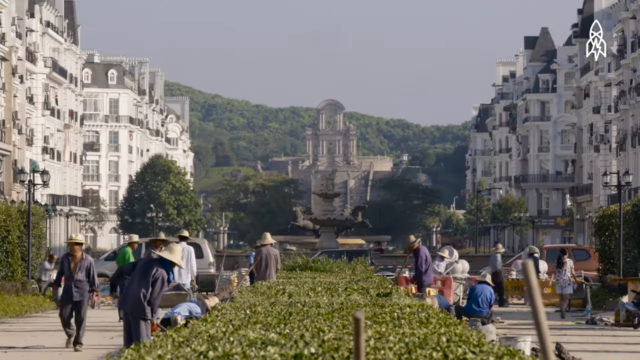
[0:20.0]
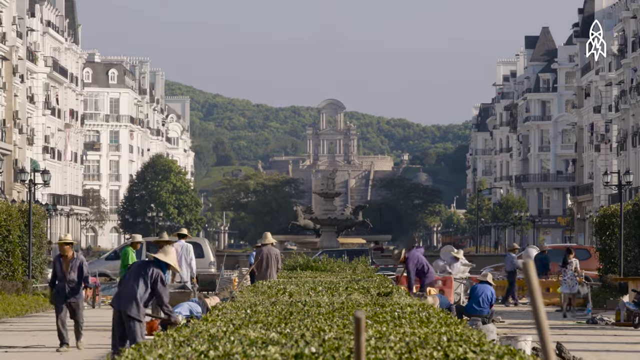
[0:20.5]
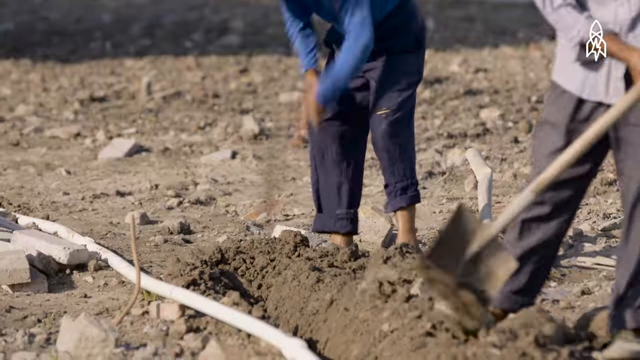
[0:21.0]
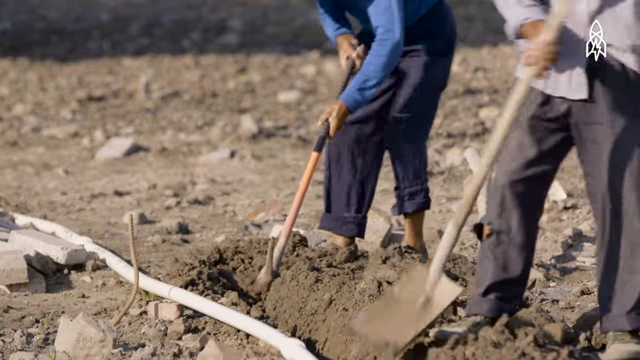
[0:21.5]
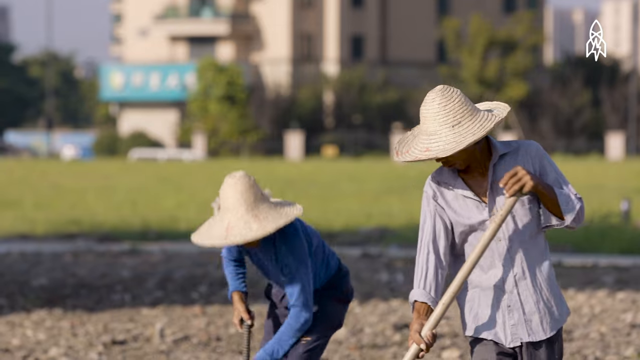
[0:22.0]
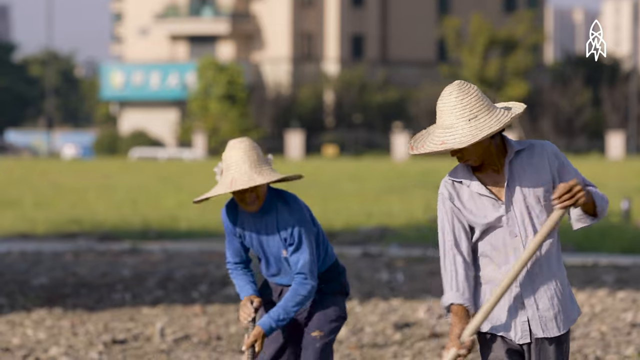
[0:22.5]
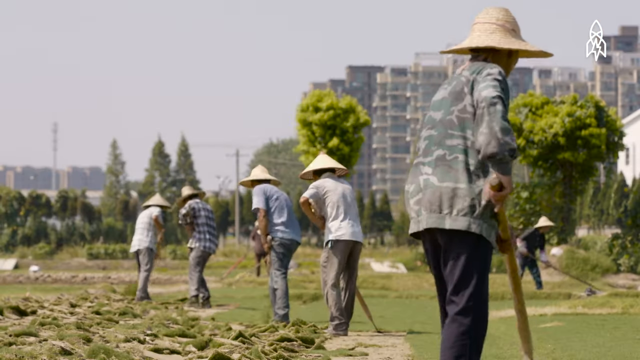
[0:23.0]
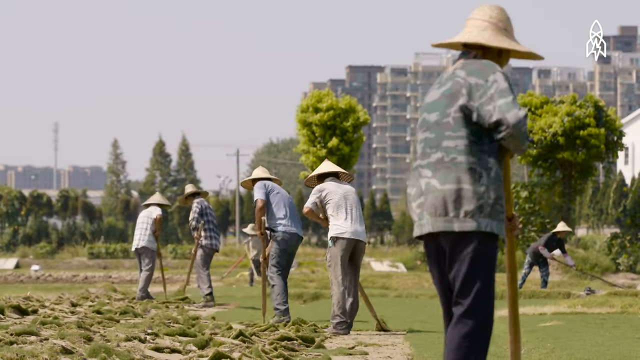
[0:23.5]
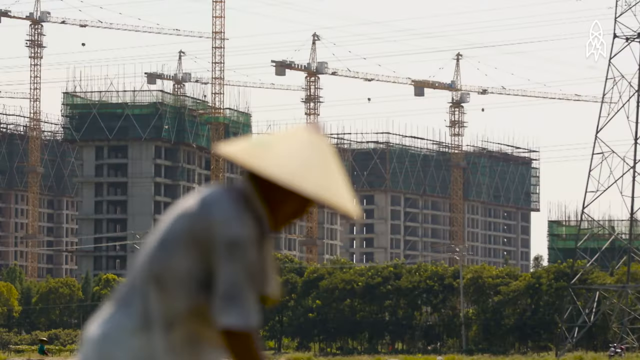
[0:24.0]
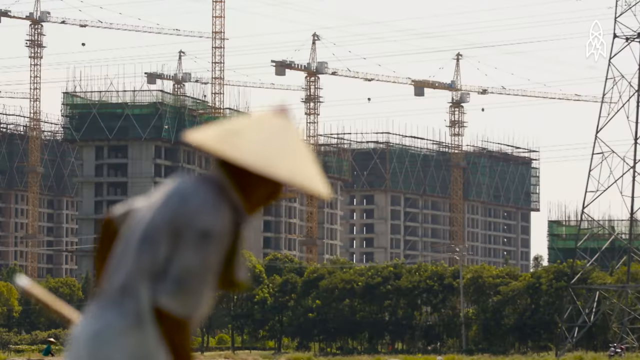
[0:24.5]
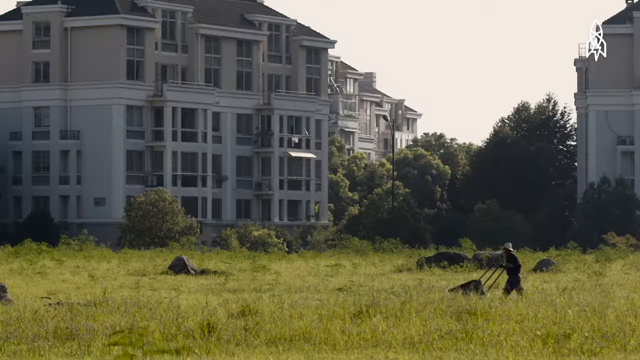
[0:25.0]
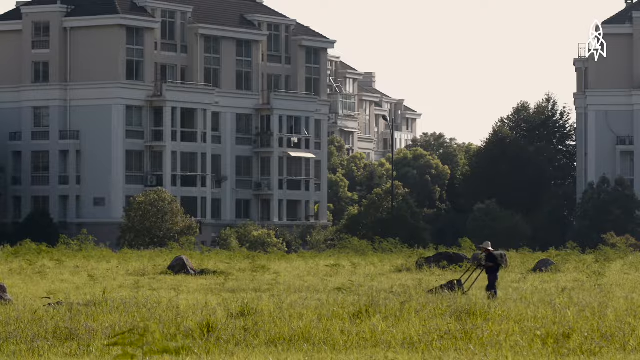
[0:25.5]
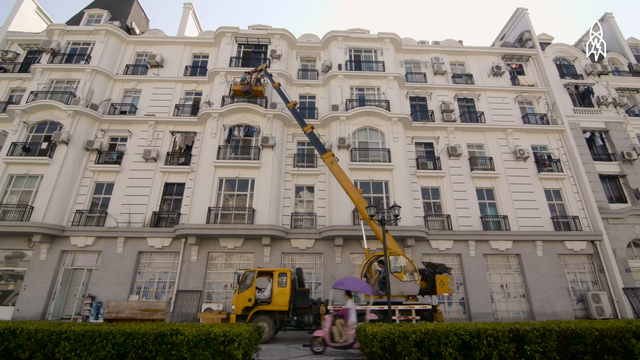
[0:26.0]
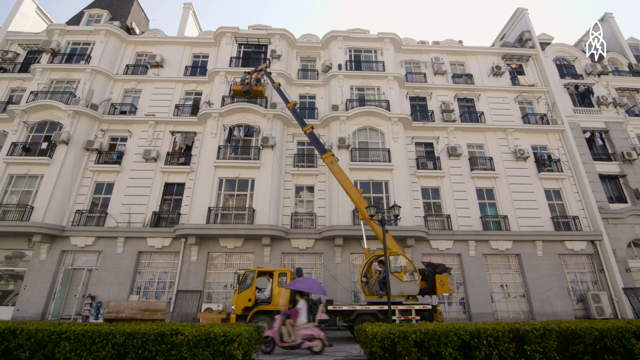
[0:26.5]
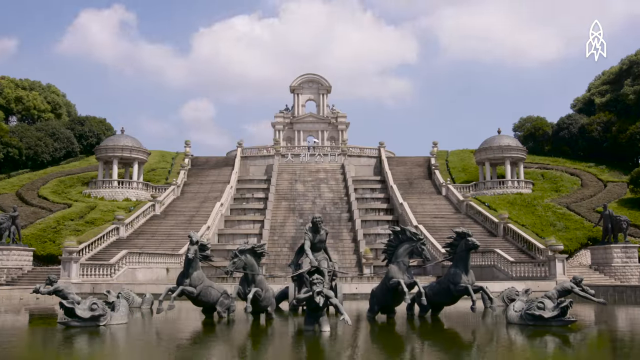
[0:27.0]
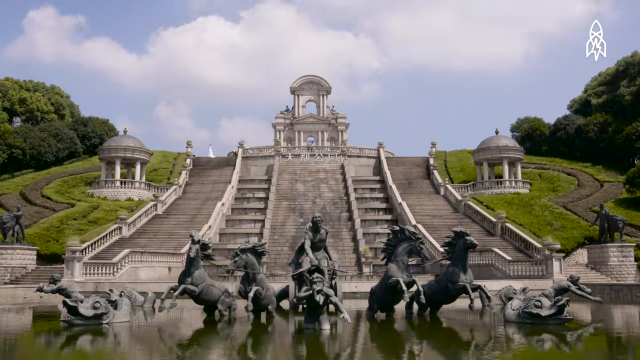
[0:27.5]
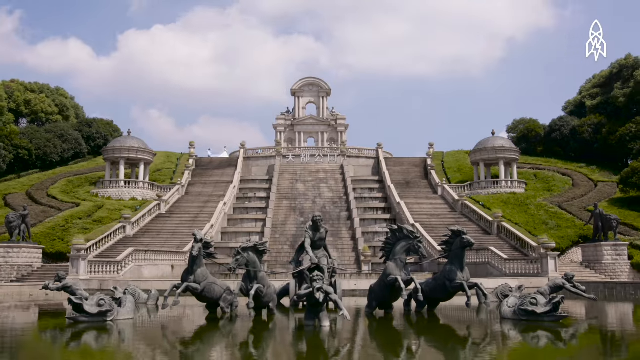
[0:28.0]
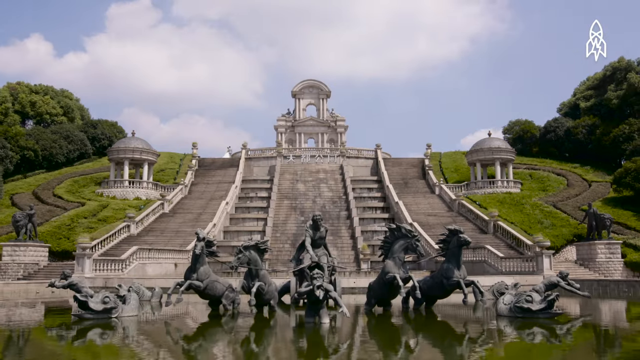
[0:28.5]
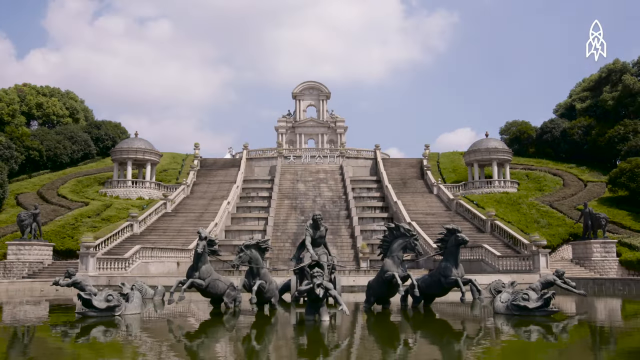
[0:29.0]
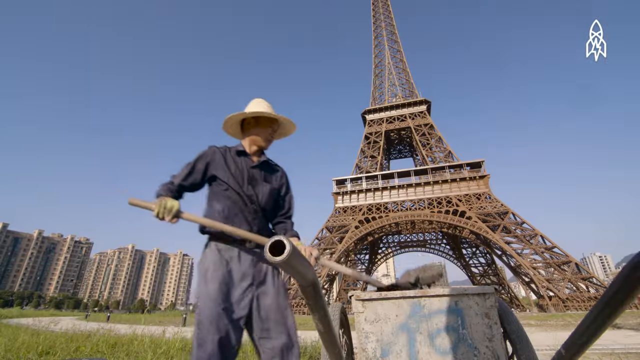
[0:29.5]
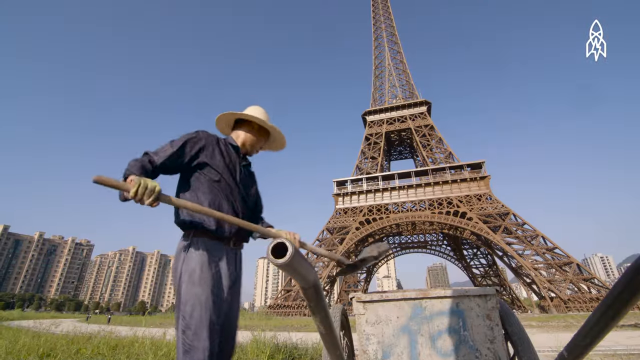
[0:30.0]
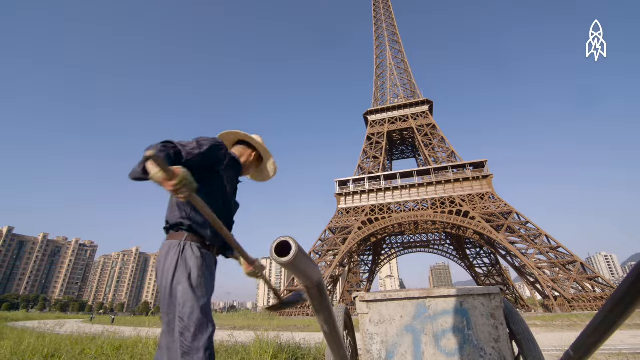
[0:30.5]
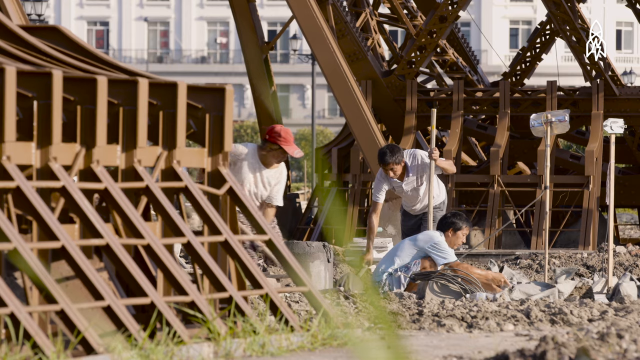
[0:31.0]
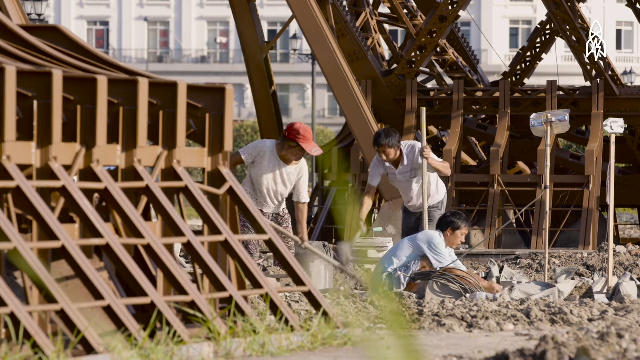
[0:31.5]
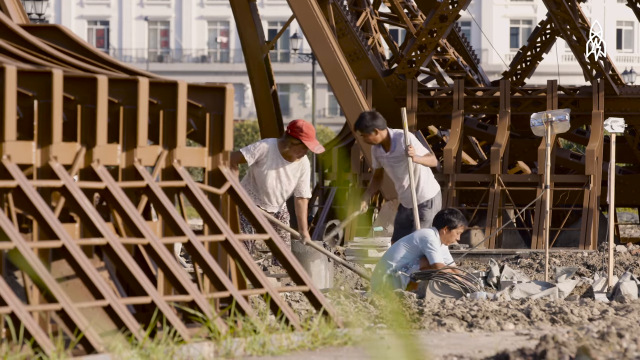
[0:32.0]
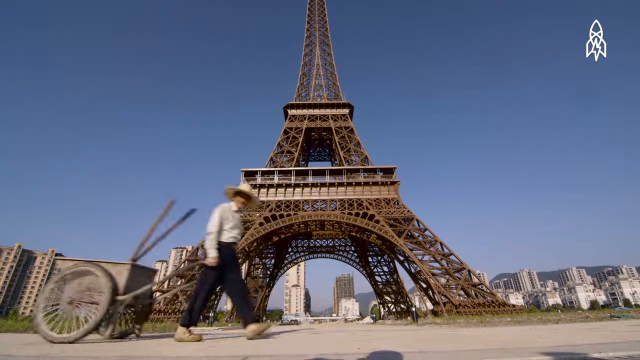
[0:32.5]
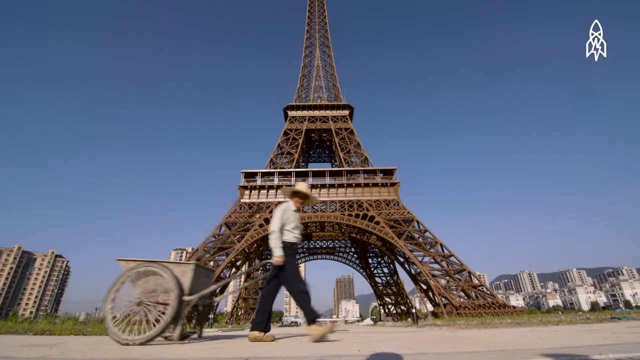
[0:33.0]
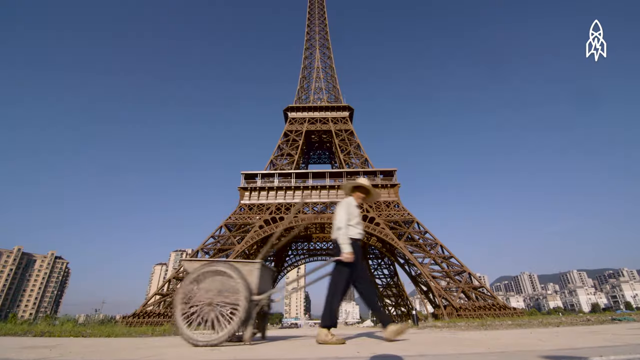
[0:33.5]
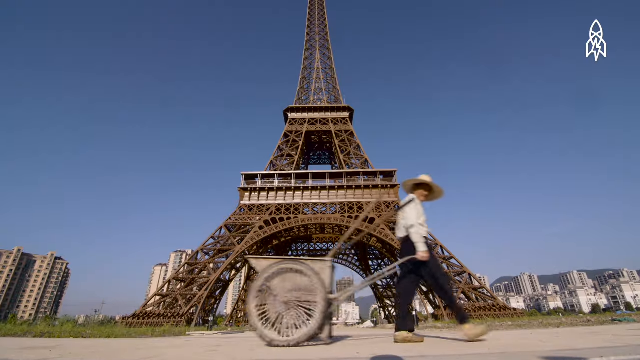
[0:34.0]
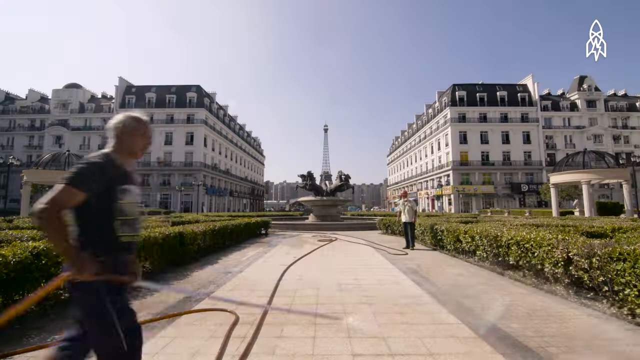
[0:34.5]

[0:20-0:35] Gardeners continue to take care of the land all around the replica Eiffel Tower. New structures seem to be under construction: many men in a field dig ditches with shovels, apparently preparing for a new installation or possibly flower gardens, and there is a lot of construction going on all around them. Many Paris monuments from around the Eiffel Tower have been recreated, including fountains with horses coming out of them. The Chinese men doing manual labor with shovels are building a ditch very close to the base of the replica tower. Shot after shot shows the men working, along with a few shots of the tower, which is much smaller than the original but looks like an exact replica. In the background there are many cranes, and buildings that appear to be apartment buildings are being built around the area.